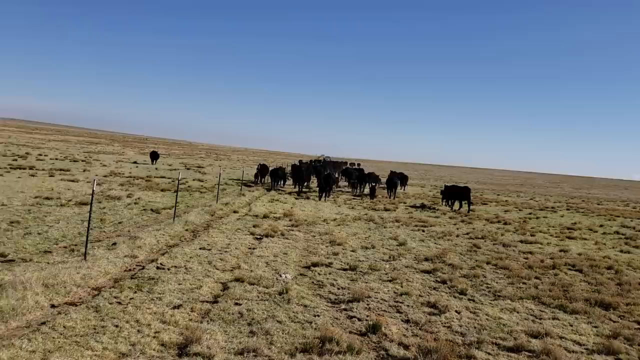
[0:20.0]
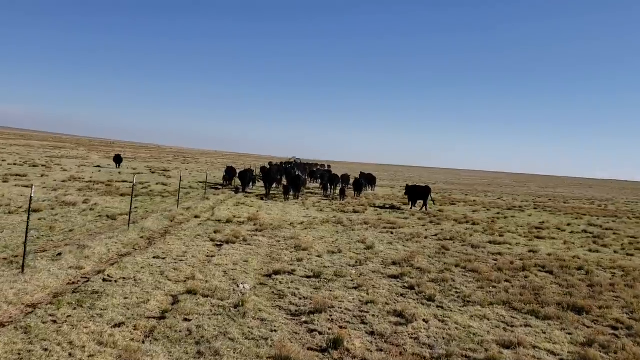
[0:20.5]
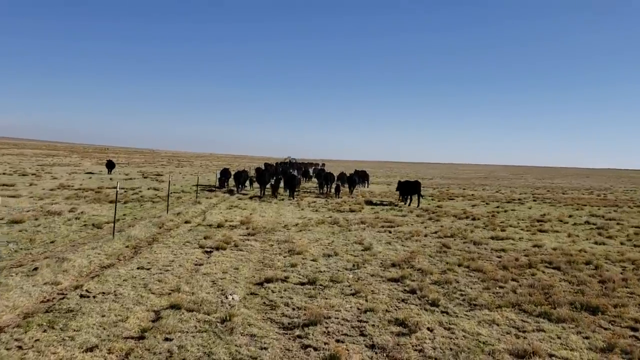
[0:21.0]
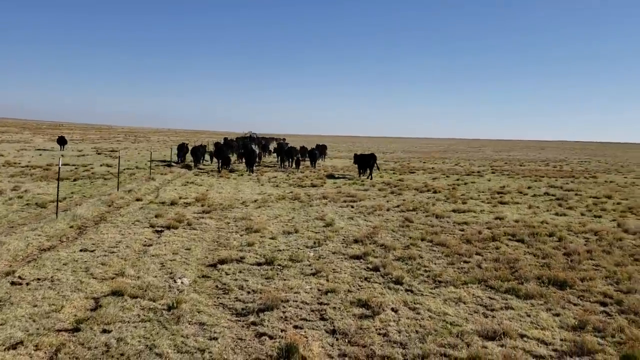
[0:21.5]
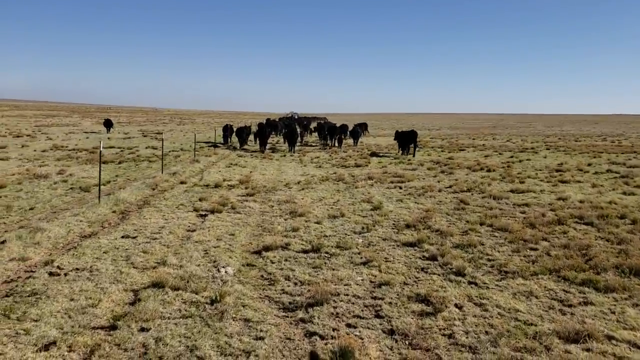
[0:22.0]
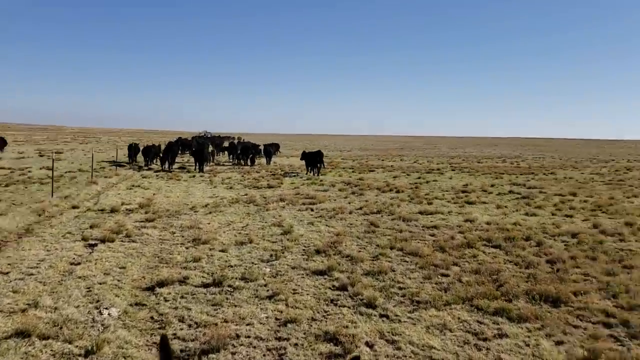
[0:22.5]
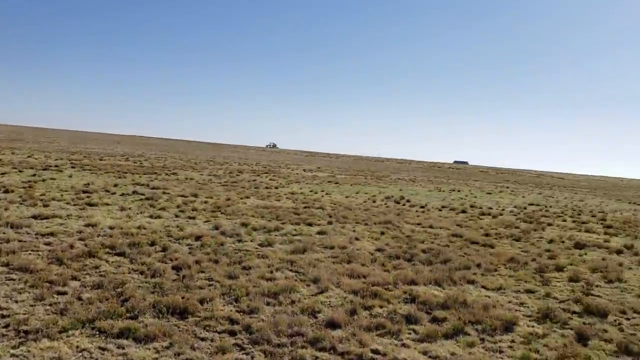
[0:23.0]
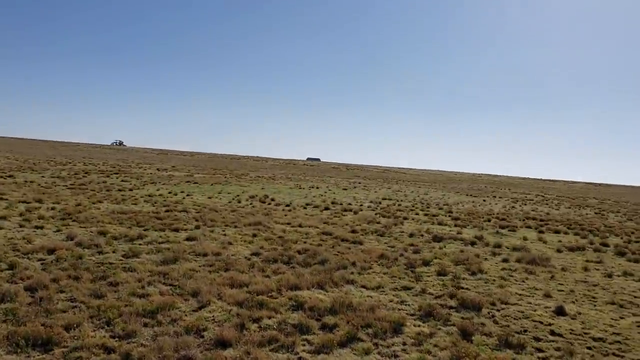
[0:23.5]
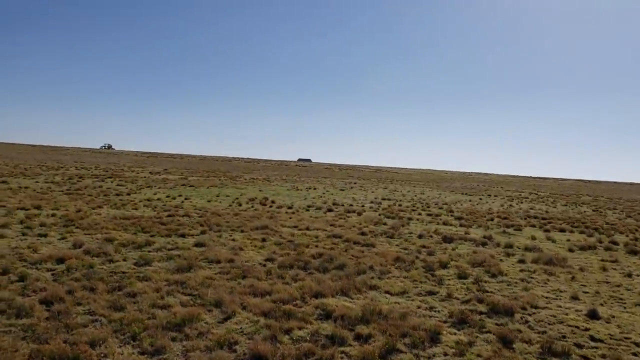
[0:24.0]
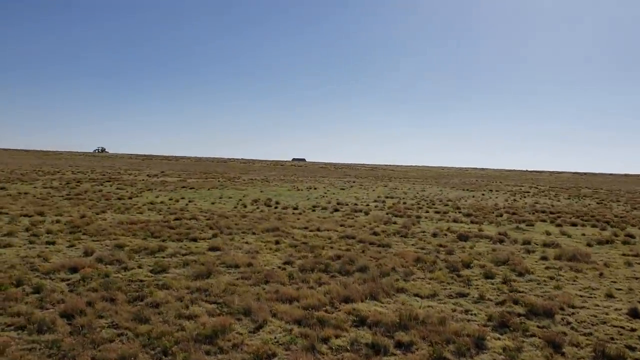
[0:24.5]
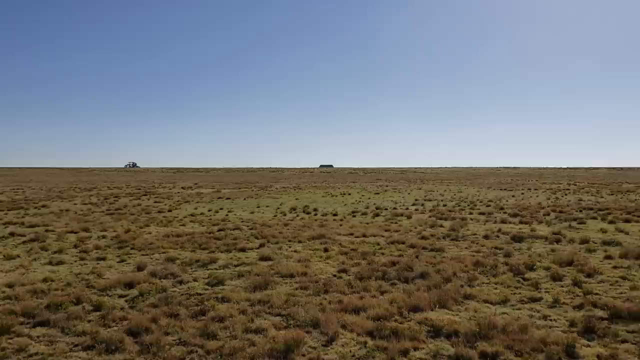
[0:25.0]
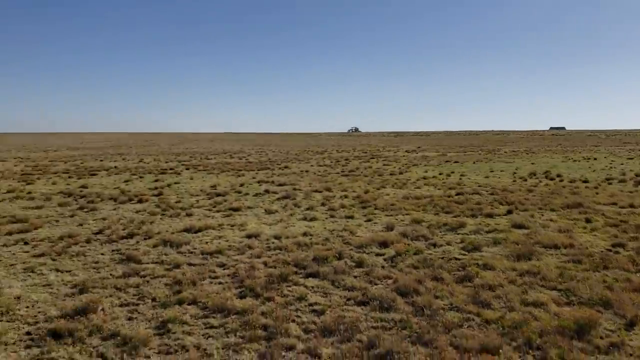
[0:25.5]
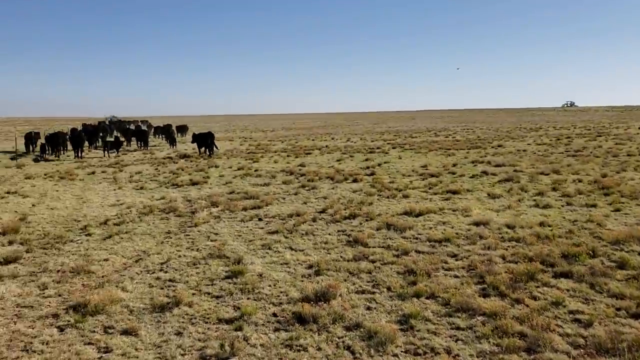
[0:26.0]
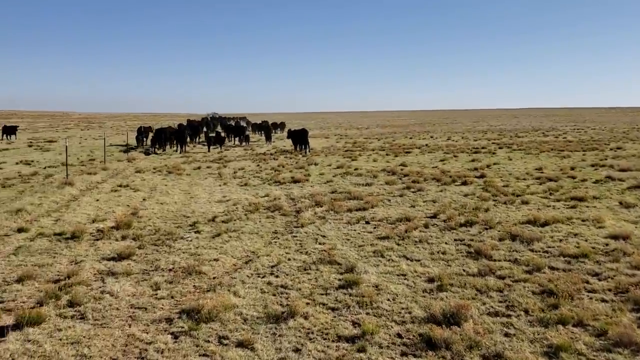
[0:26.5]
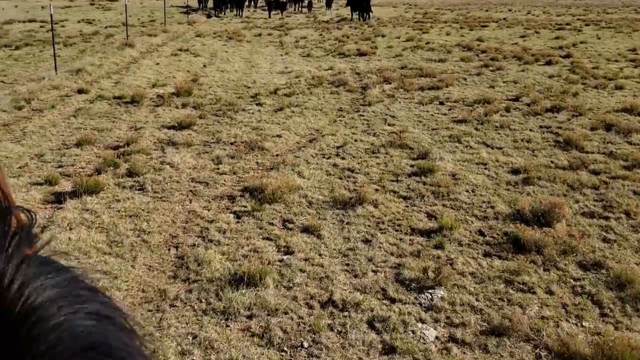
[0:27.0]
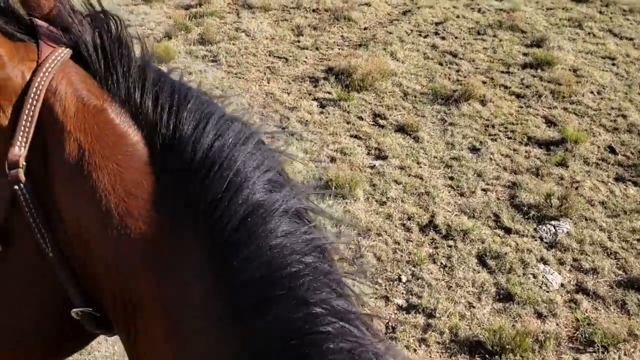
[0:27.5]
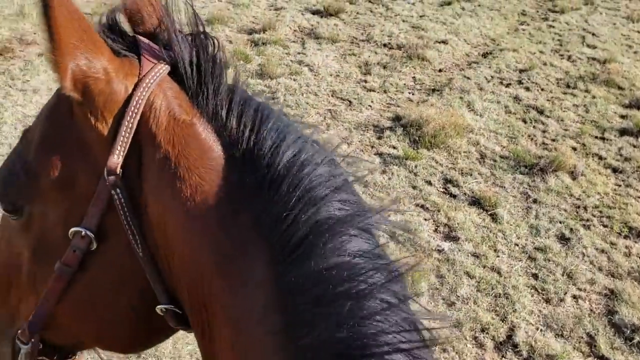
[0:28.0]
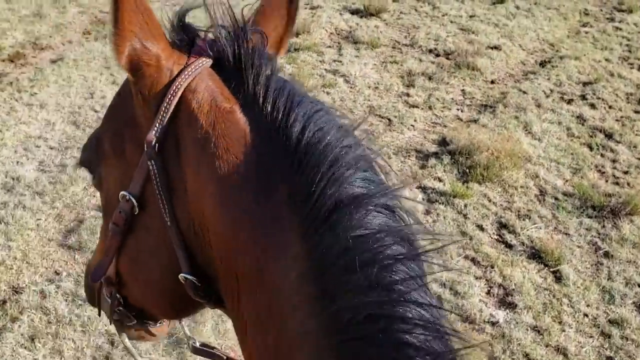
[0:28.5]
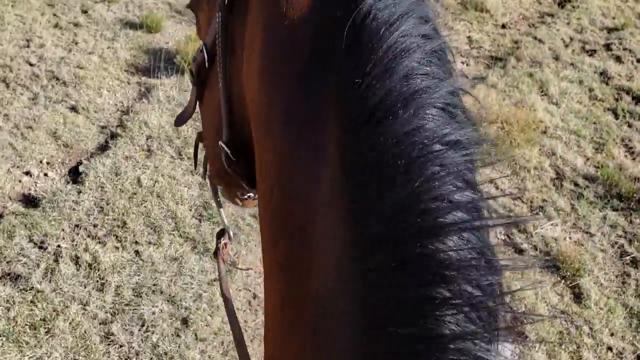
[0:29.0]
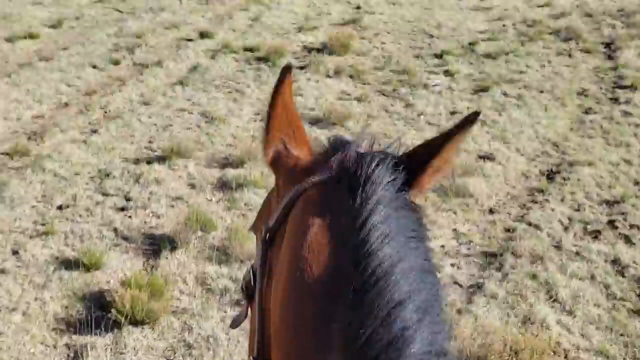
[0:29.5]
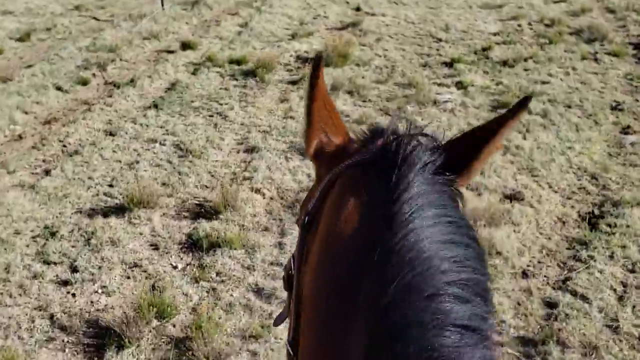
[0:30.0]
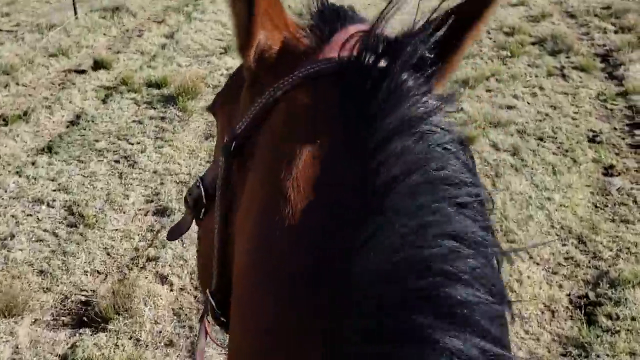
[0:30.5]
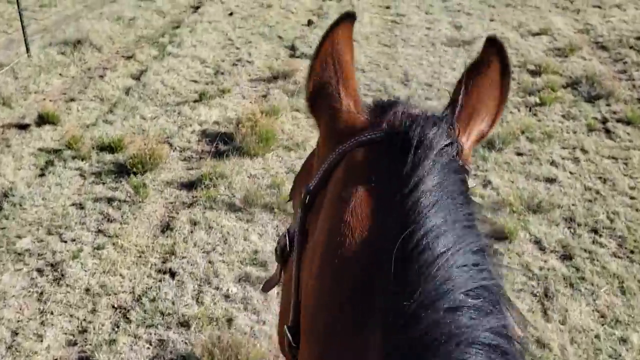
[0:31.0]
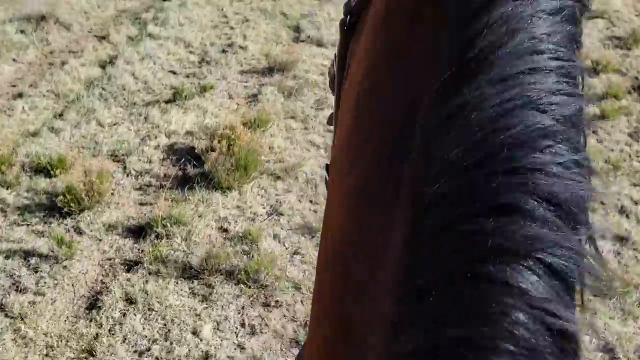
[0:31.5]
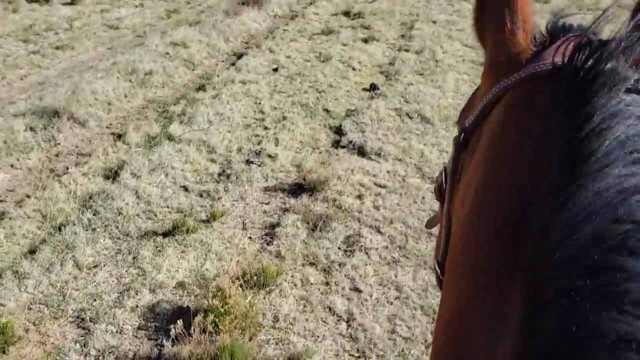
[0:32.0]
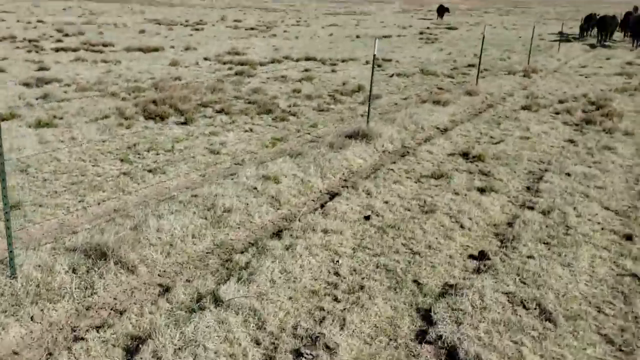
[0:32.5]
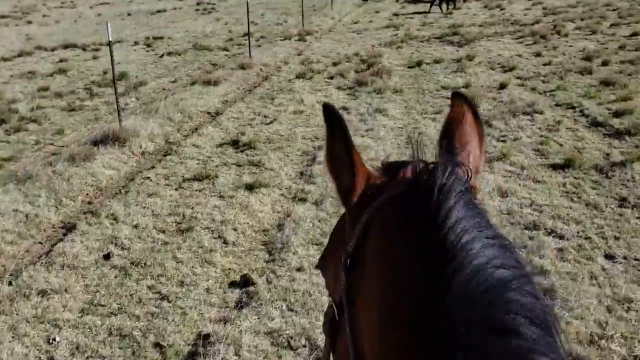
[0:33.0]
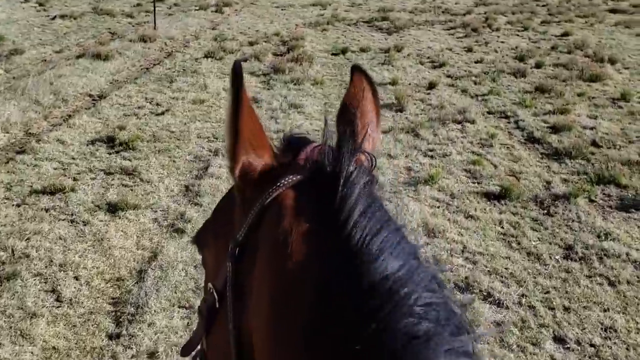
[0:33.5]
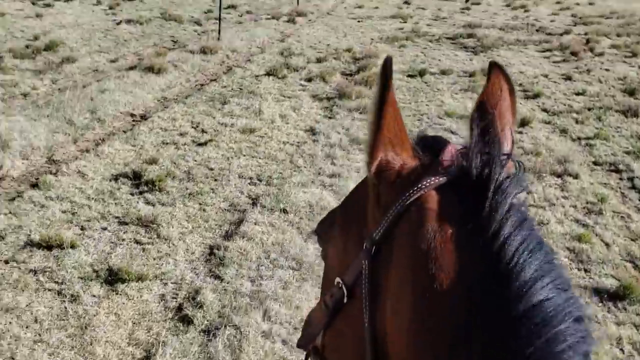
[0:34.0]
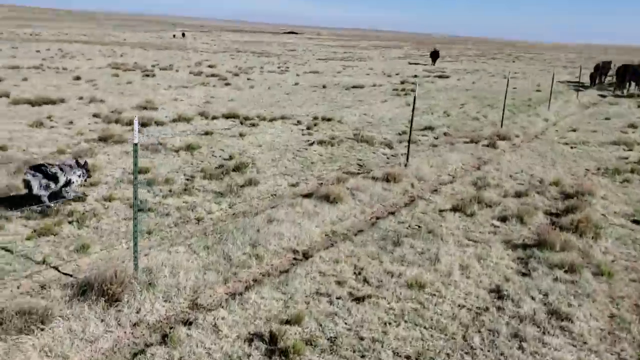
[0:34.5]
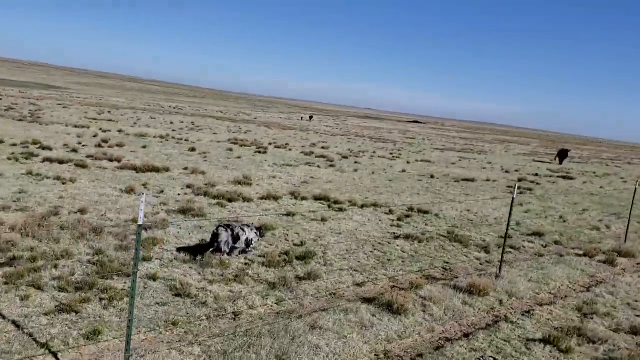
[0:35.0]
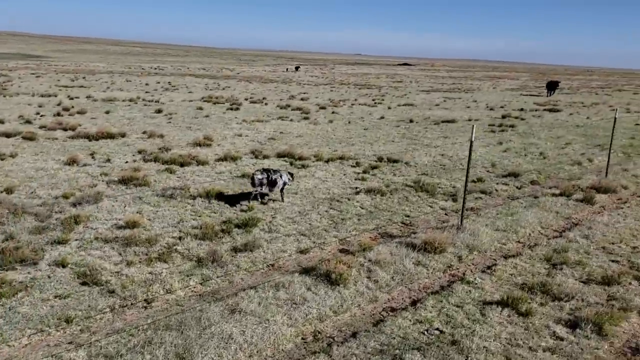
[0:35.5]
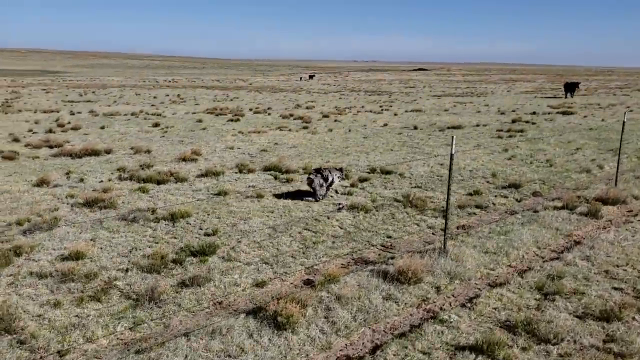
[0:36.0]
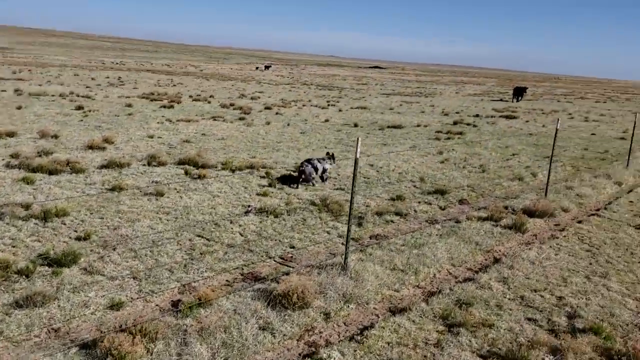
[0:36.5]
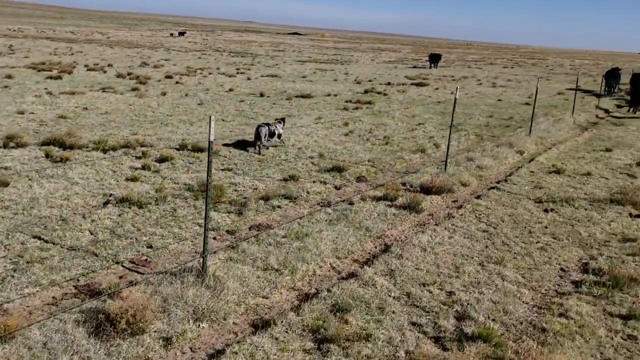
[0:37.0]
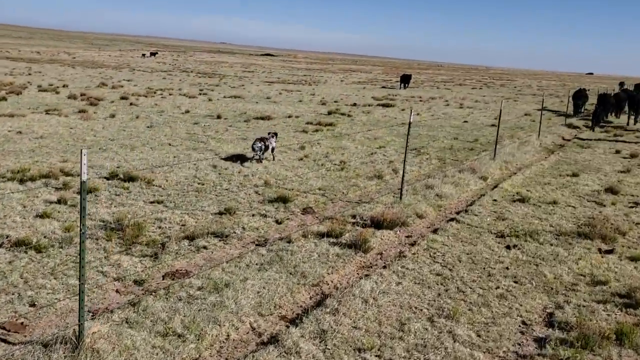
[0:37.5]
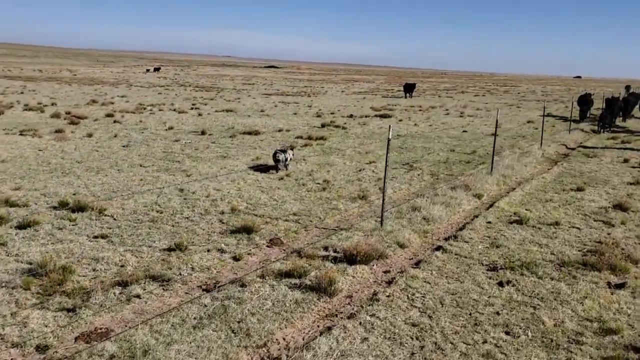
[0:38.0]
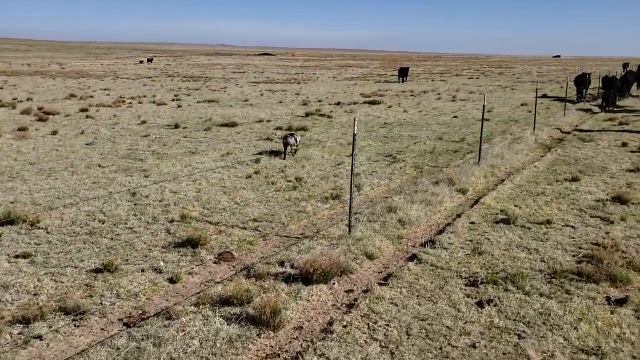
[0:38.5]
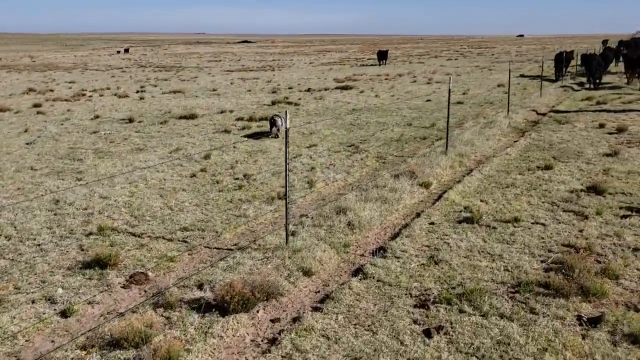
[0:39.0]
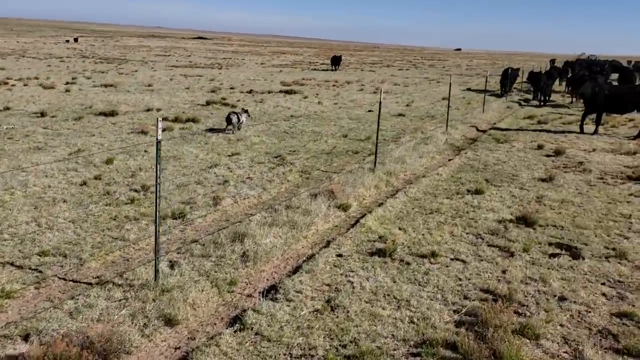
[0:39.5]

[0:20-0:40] The group of cattle is up ahead, and the camera pans to the side to show a flat field with nothing in it; the cattle appear to be grazing. The landscape looks like a desert or a ranch setting, possibly in Texas, with barely any plants, and the plants on the ground are dried up. There are no buildings ahead, just flat ground. The camera pans down to the horse's head, showing the footage is from the rider's perspective, possibly from a body cam. The horse's mane is visible as the horse gallops, apparently heading toward the cattle ahead. To its left, a herding dog with a cookies-and-cream coat, possibly some kind of retriever, runs alongside the horse.